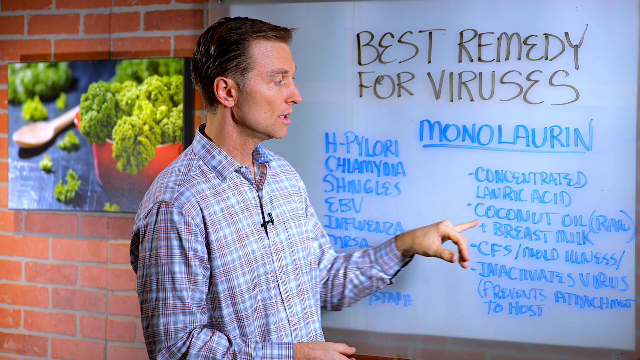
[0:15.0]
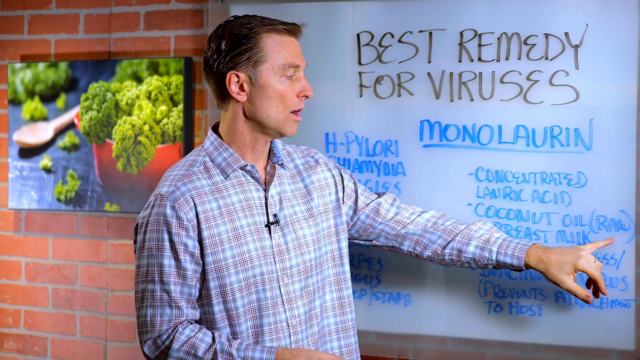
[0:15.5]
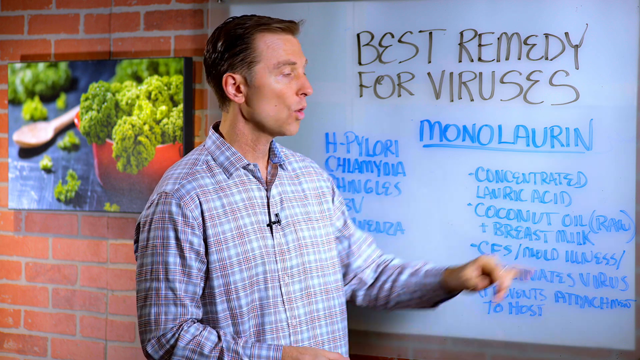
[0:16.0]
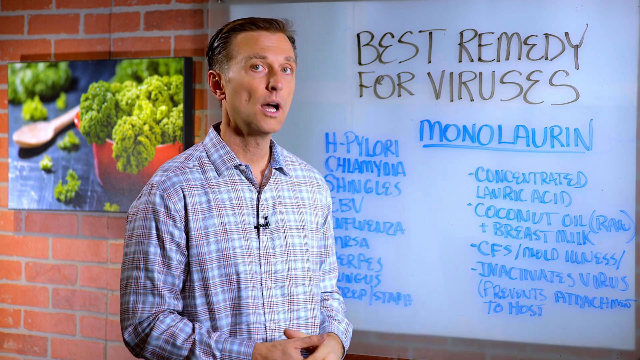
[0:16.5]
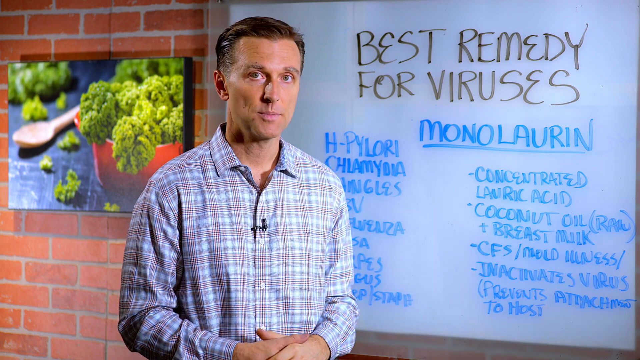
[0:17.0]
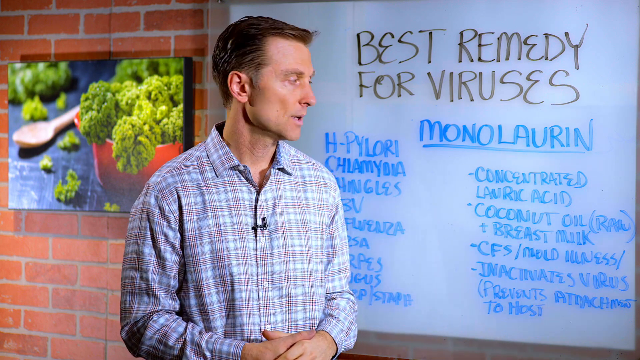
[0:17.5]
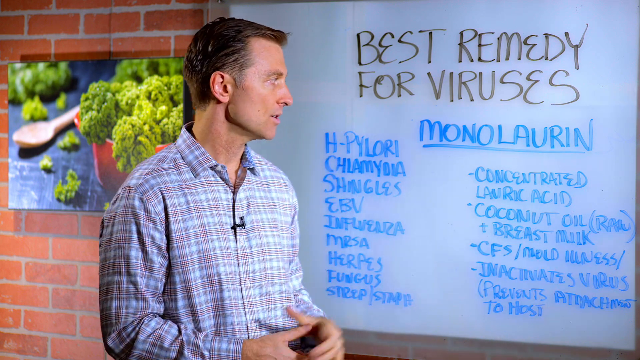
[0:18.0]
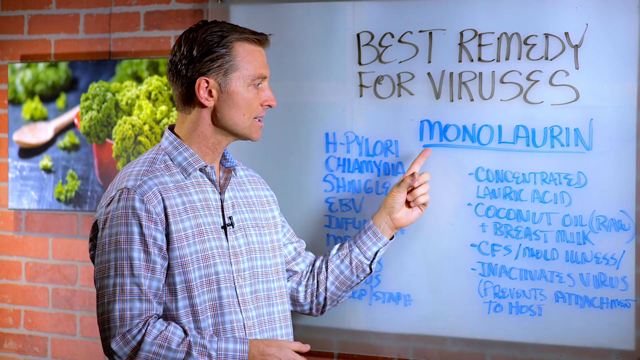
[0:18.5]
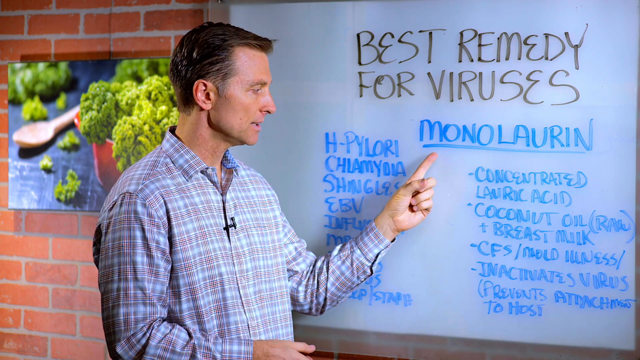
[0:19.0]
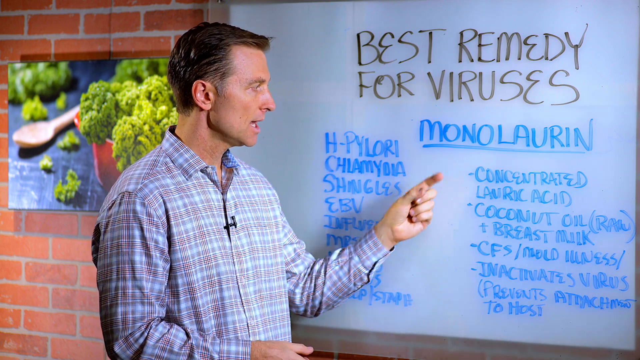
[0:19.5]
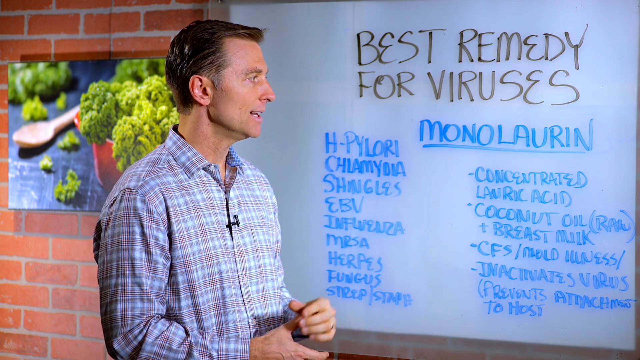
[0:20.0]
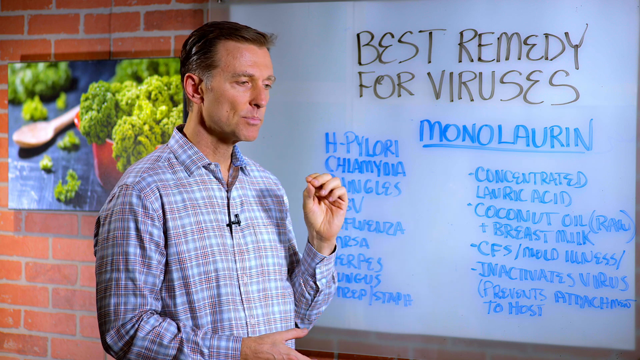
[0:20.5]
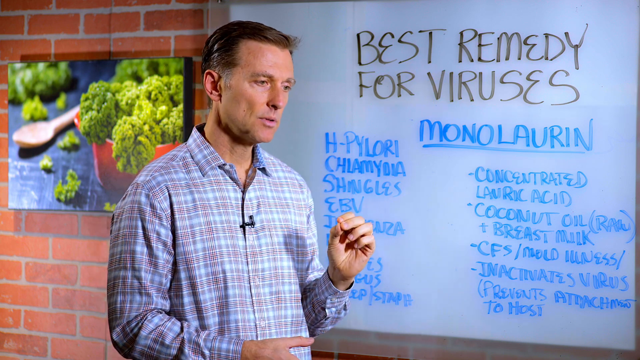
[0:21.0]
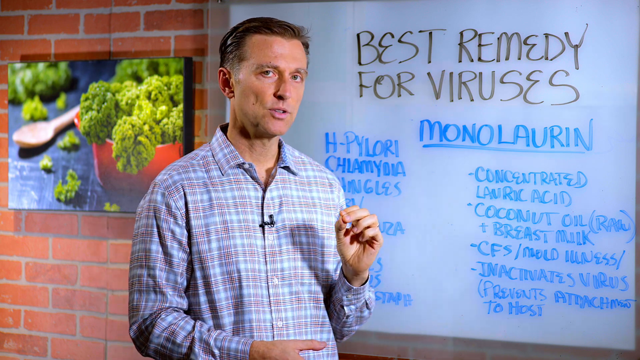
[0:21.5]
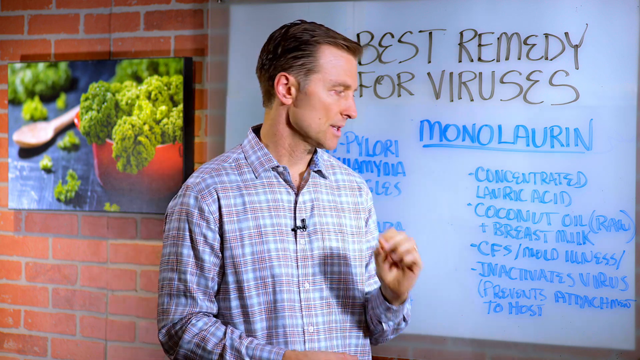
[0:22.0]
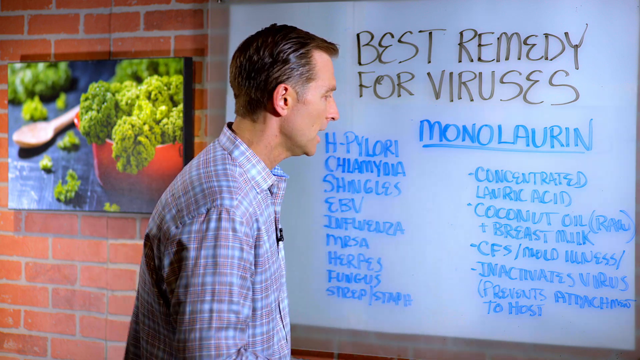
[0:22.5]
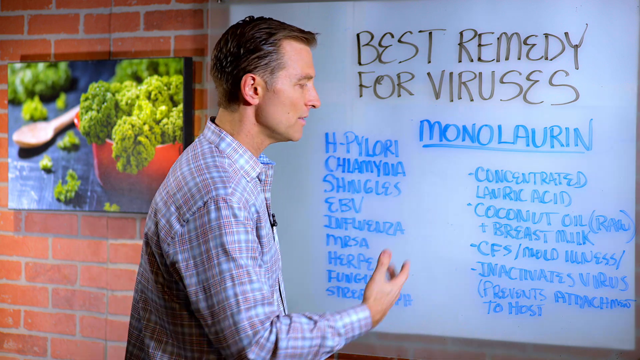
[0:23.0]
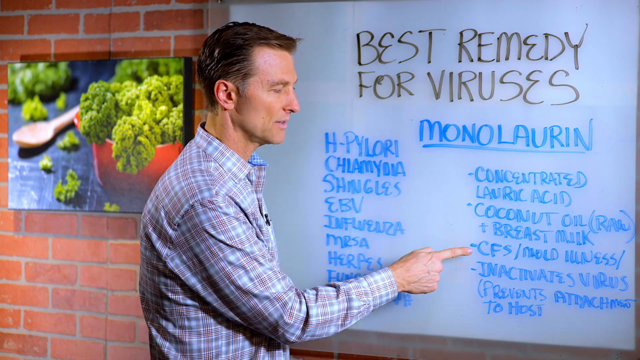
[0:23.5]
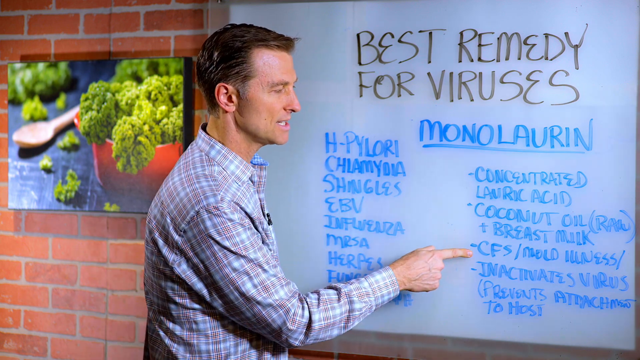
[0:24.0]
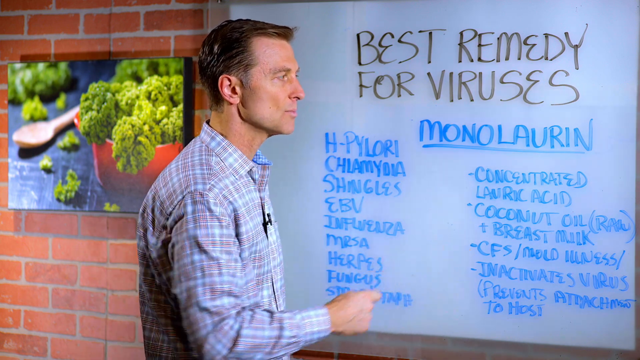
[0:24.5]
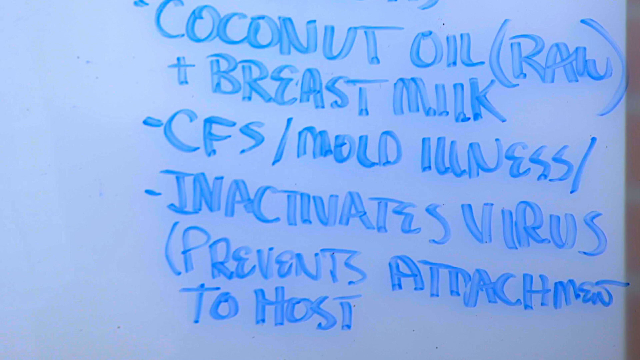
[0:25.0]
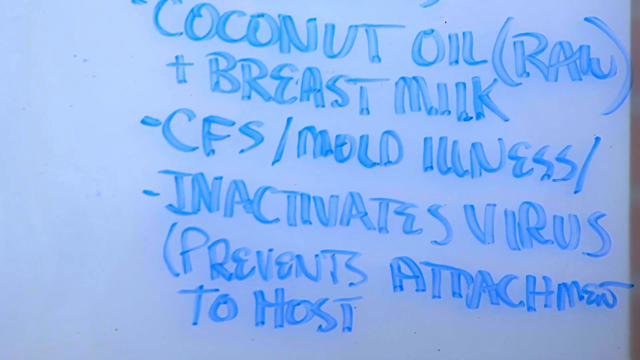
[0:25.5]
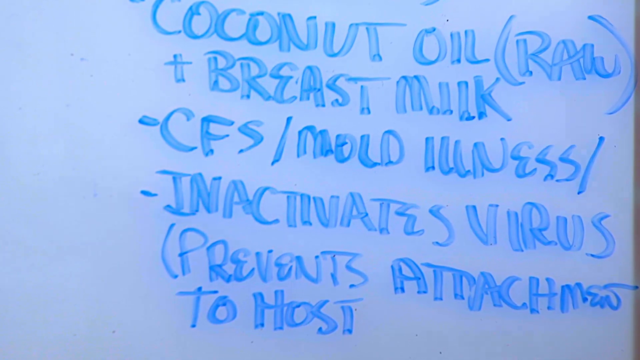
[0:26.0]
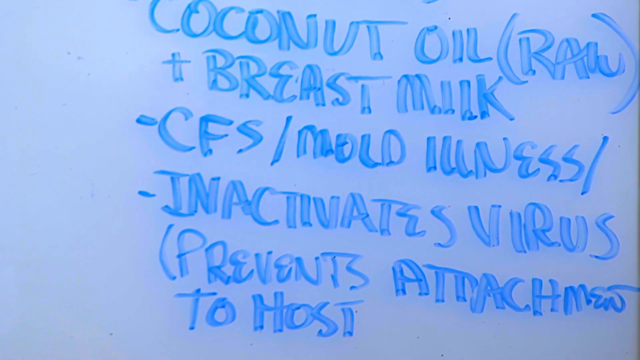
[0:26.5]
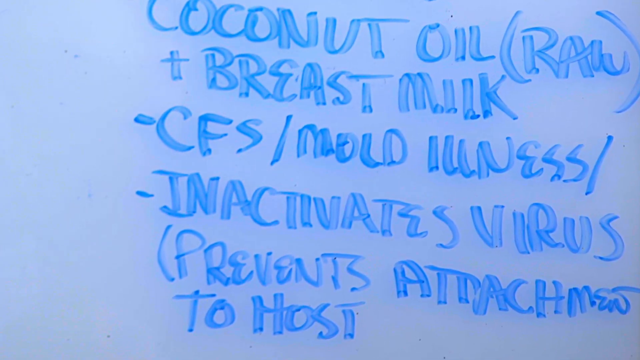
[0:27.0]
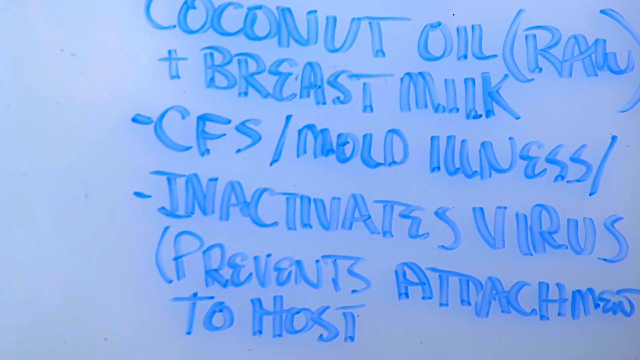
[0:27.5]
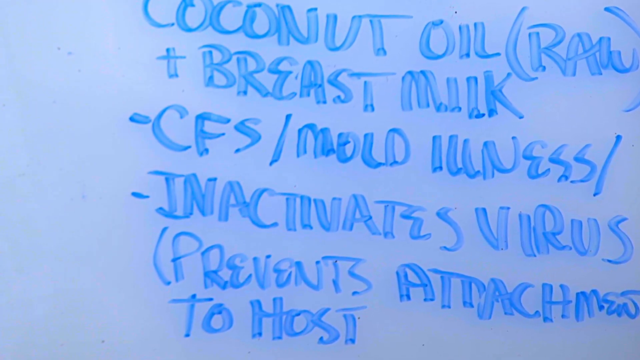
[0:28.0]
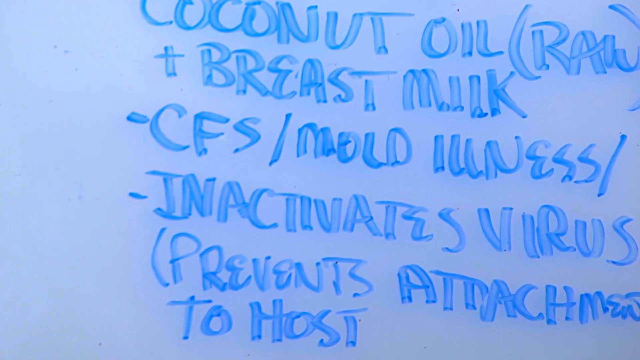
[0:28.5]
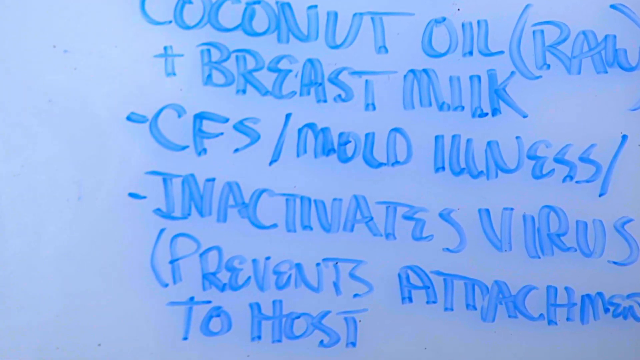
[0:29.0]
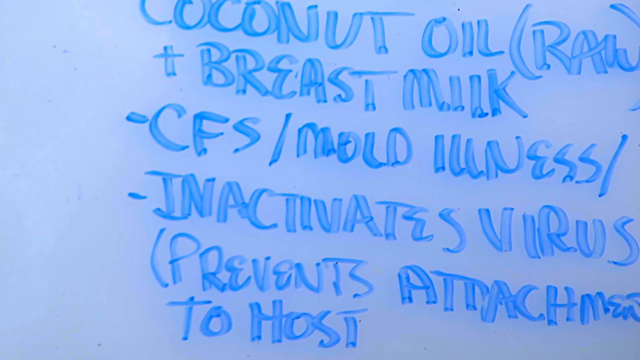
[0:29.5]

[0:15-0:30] The man lectures, seemingly zeroing in on a couple of areas of the board with items such as concentrated lauric acid, coconut oil, breast milk, CFS for chronic fatigue syndrome, and mold illnesses. He points at the words with his hands, sometimes using his right pointer finger, and periodically points to the main word, monolaurin. He looks to be a middle-aged Caucasian man with brown hair and blue eyes, wearing a brown and blue plaid shirt.